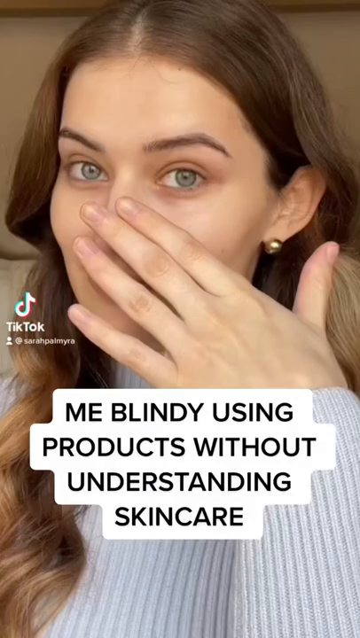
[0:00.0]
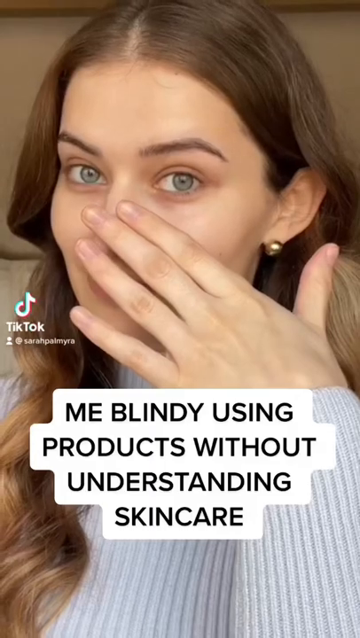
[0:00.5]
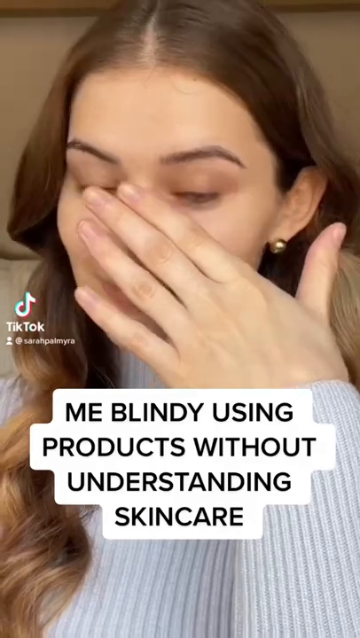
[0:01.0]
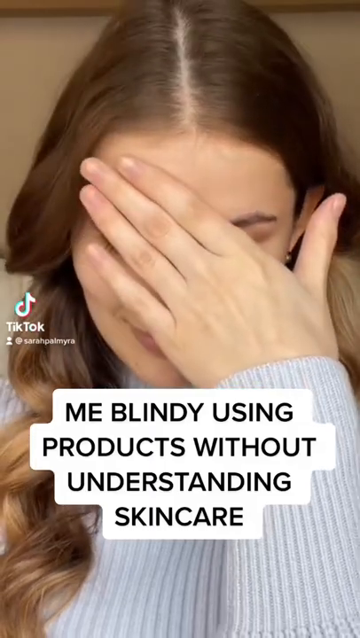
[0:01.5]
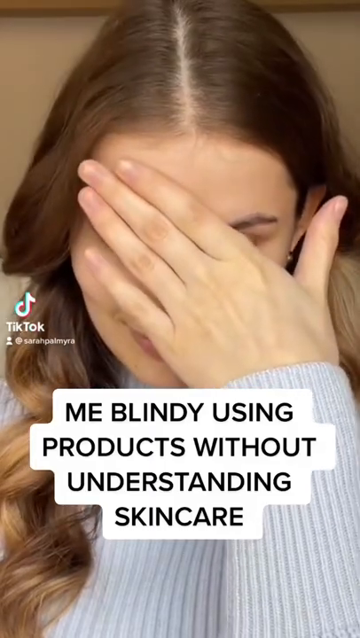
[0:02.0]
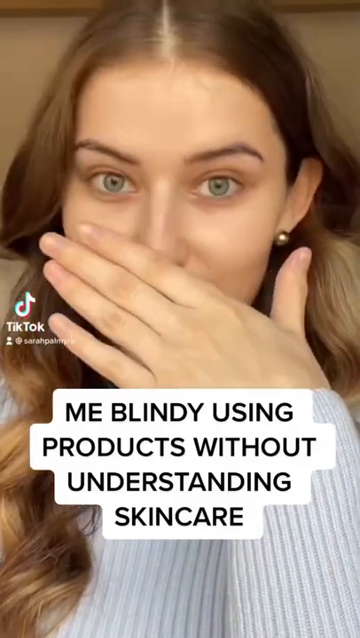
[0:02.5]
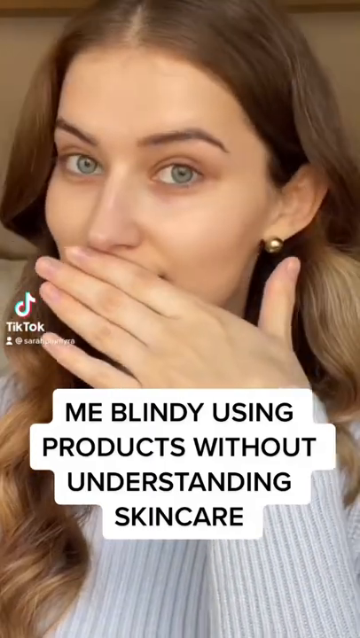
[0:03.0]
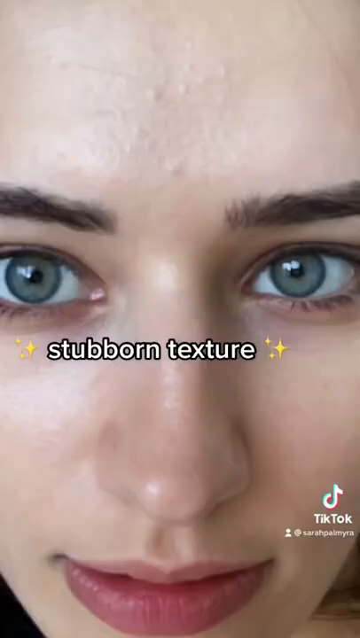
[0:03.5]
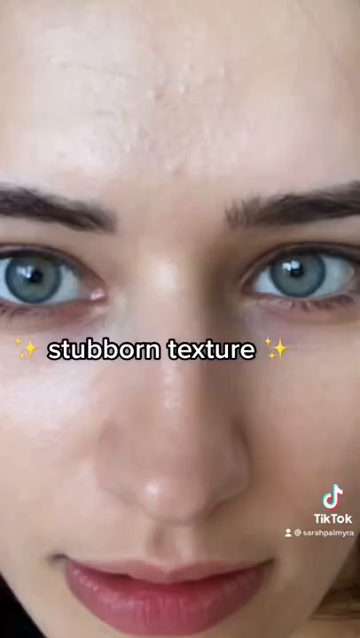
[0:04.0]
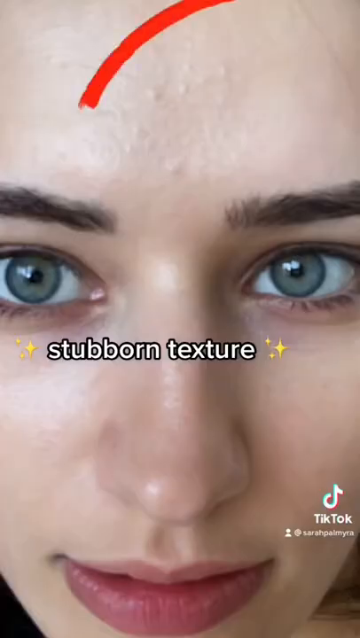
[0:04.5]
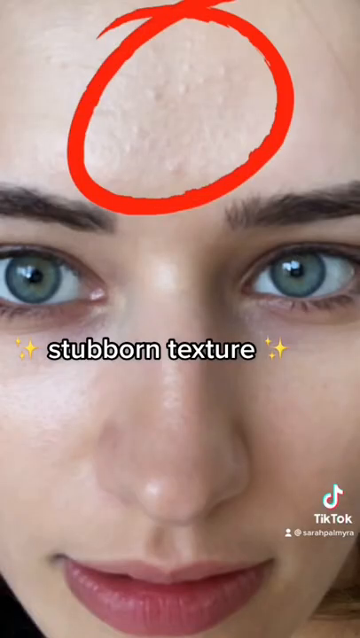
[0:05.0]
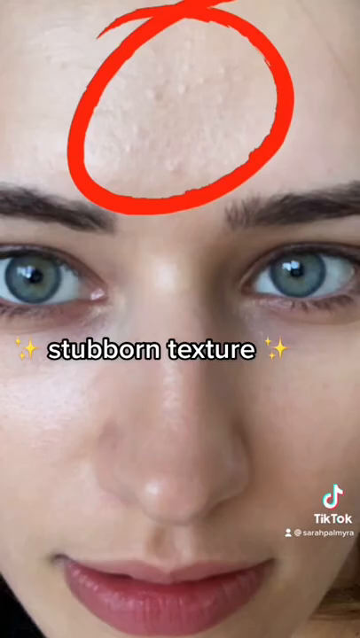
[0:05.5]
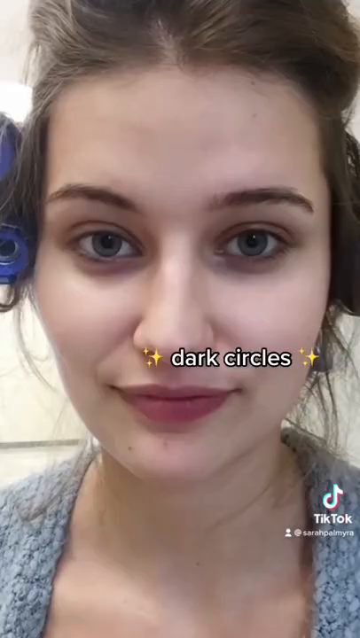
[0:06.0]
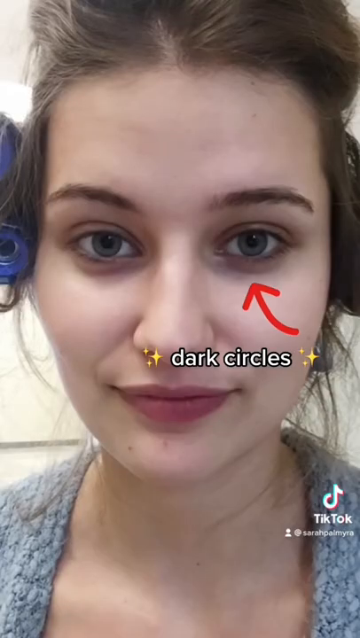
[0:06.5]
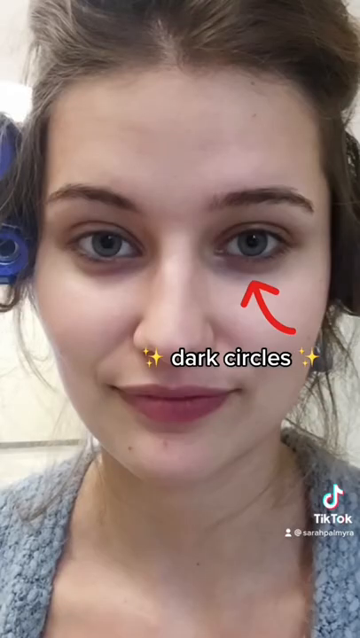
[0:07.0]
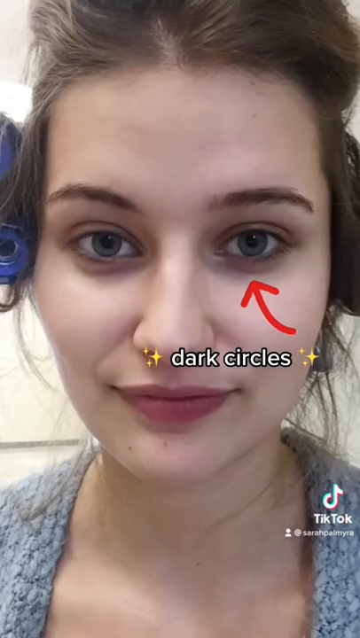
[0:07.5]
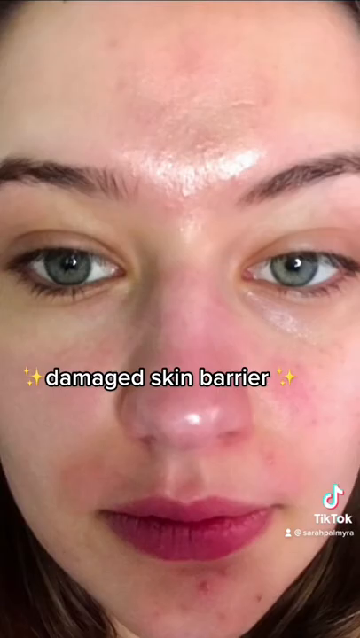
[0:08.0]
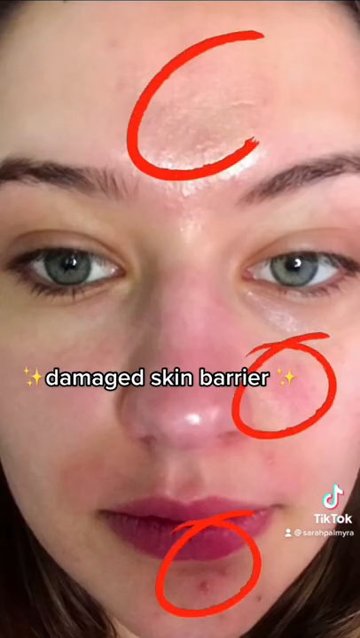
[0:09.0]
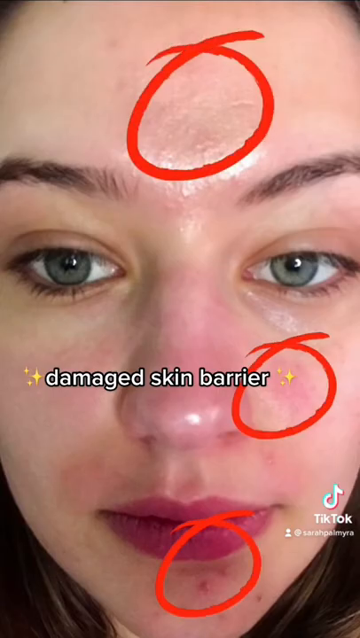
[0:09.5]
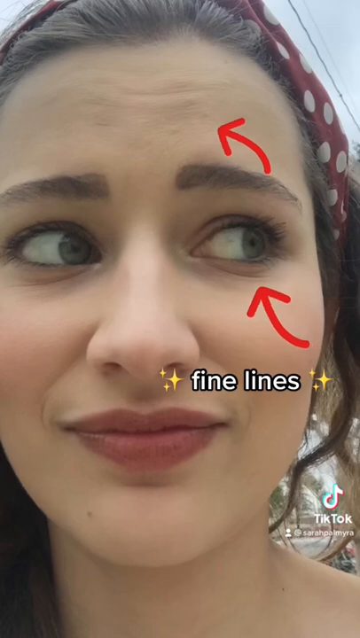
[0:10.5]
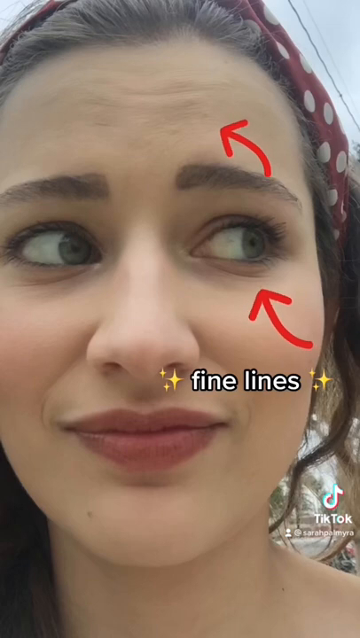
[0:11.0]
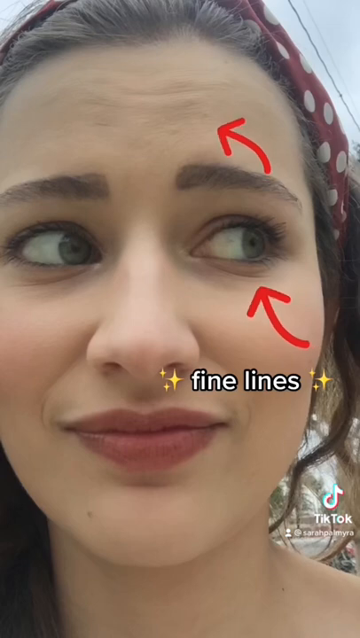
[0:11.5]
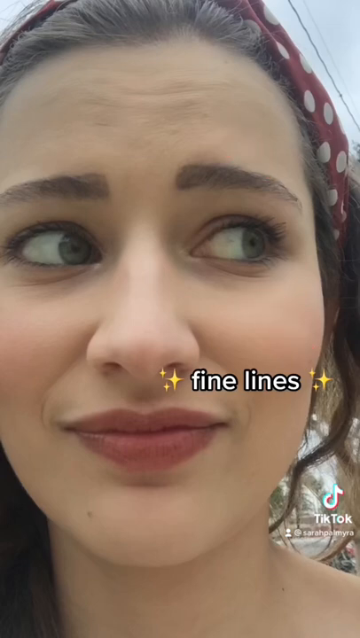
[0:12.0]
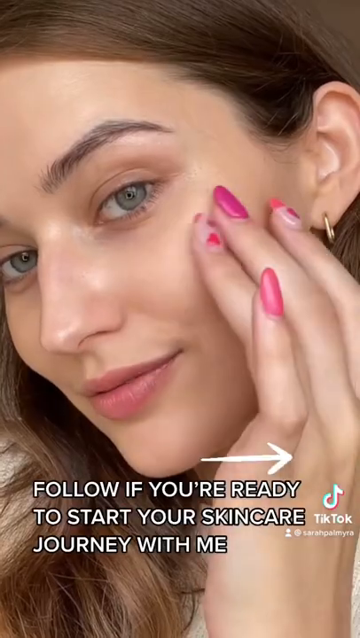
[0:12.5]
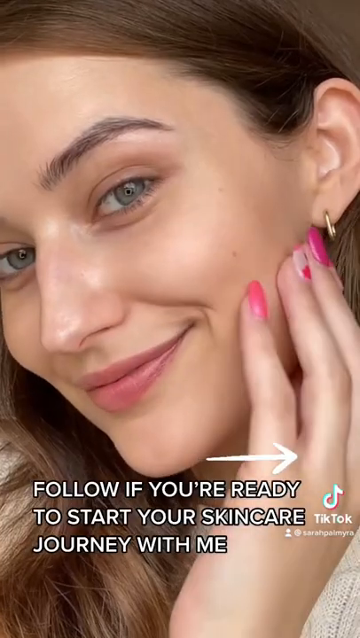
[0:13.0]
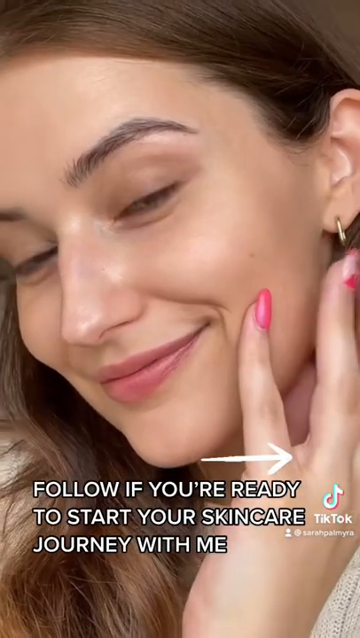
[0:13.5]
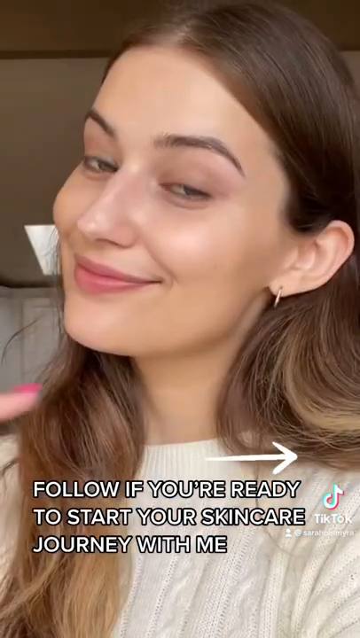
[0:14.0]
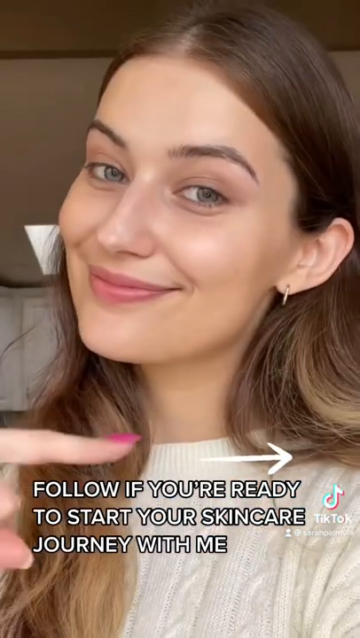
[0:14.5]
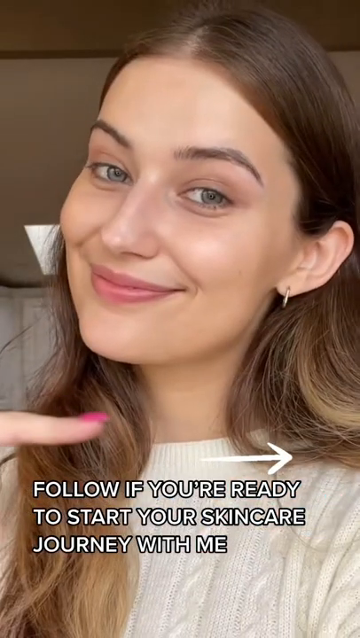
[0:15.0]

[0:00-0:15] A girl with long brown hair, wearing a light blue sweater, starts out acting shy on camera and covers her face. She says "Me blindly use products without knowing much about skincare." A variety of different pictures follows. One set shows her fine lines, with red arrows pointing out the areas, one underneath her eye and the other on her forehead. Another picture shows dark circles, with a red arrow pointing to them. She shows the texture of her skin, with bumps on her forehead. For damaged skin barriers, she circles her forehead, her cheek, and around her chin area. At the end she smiles and points to how to follow her in this TikTok video. She is wearing earrings, and in one picture it looks like she has her hair in bows on the sides of her head.